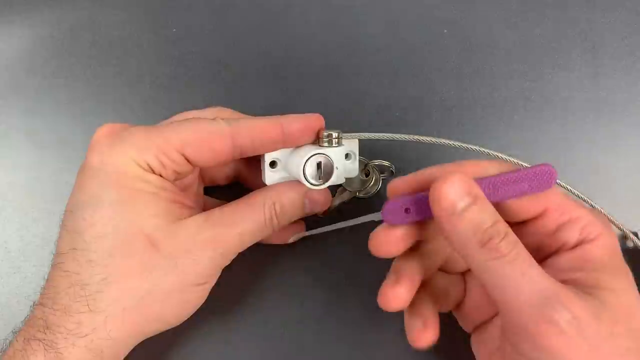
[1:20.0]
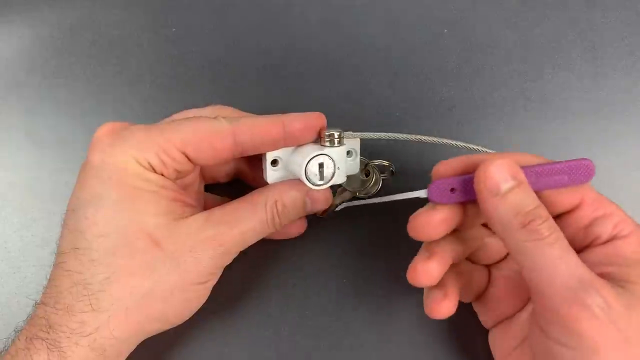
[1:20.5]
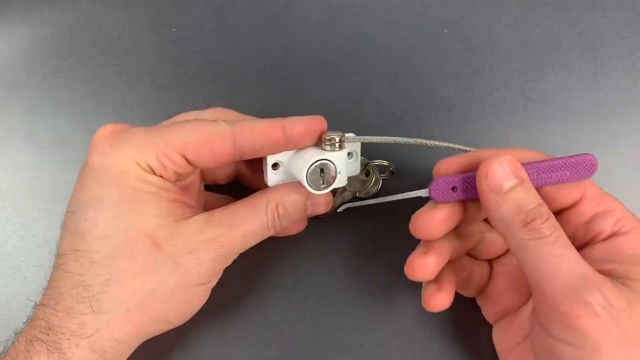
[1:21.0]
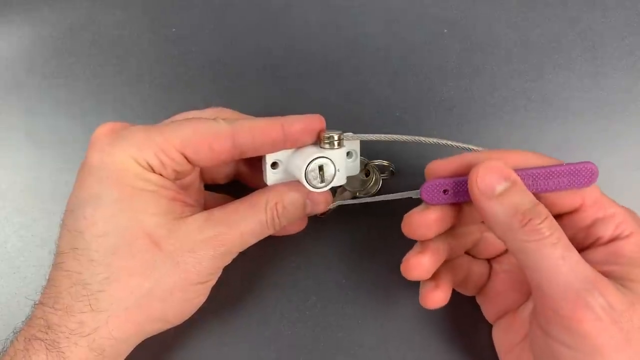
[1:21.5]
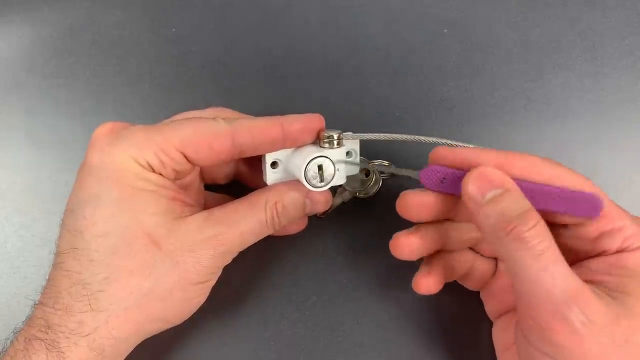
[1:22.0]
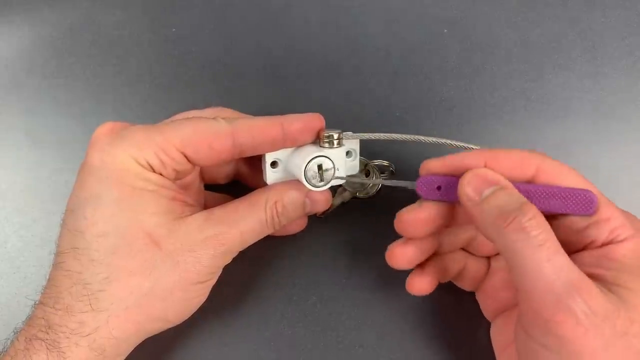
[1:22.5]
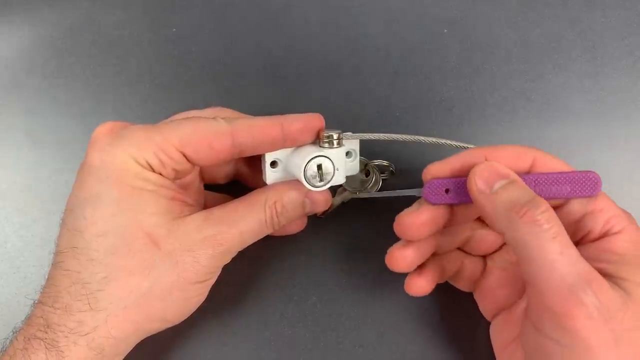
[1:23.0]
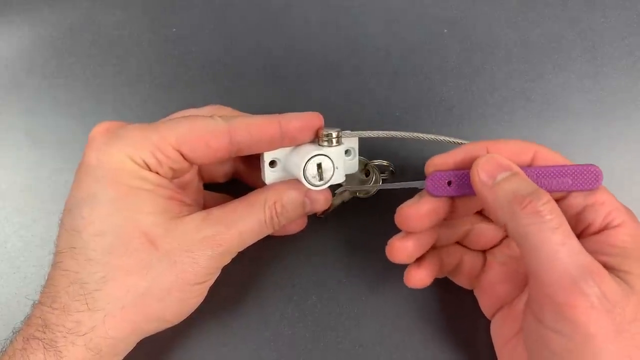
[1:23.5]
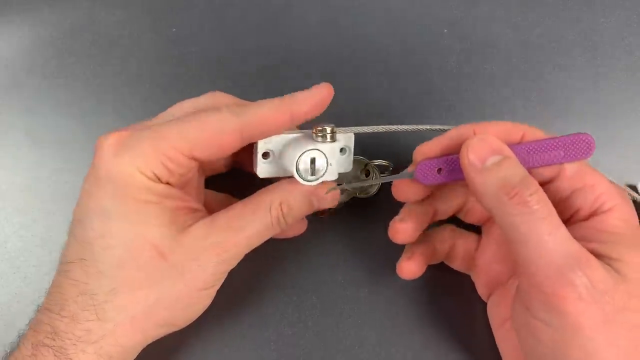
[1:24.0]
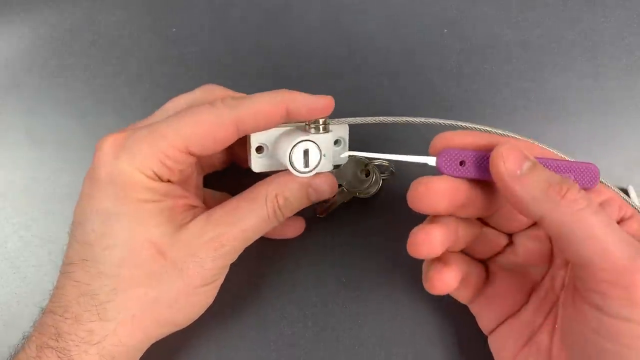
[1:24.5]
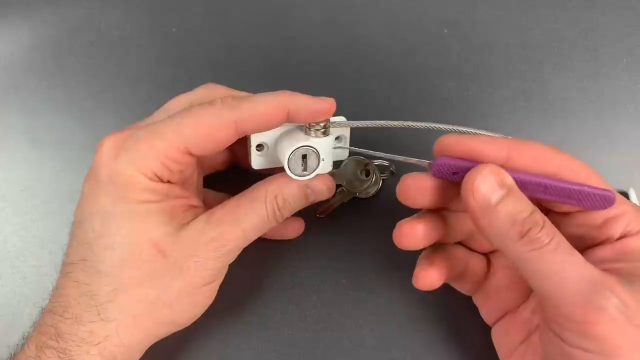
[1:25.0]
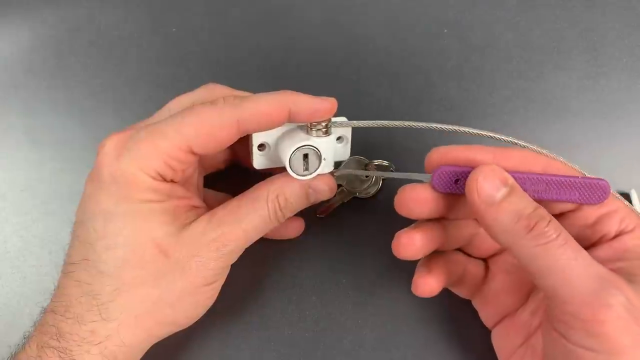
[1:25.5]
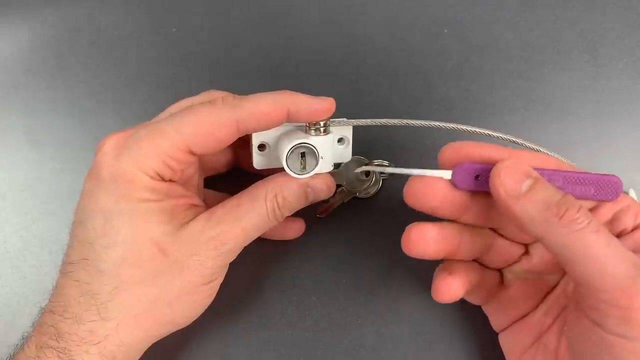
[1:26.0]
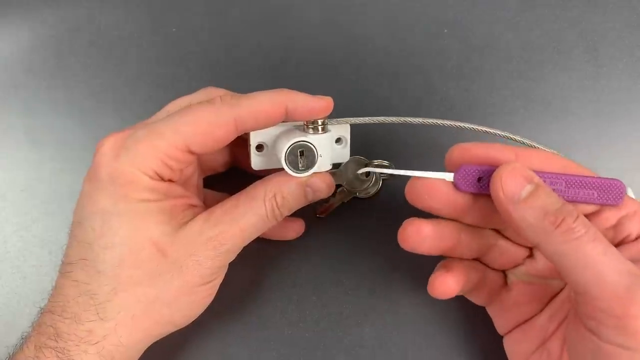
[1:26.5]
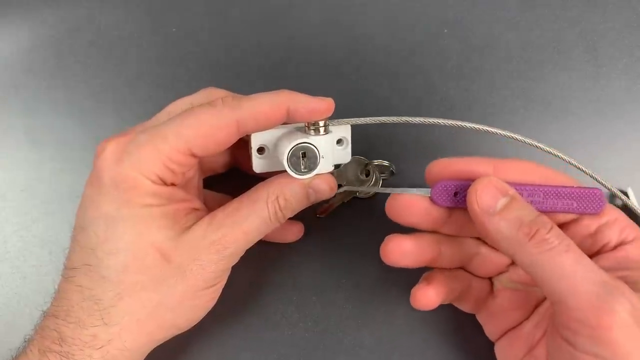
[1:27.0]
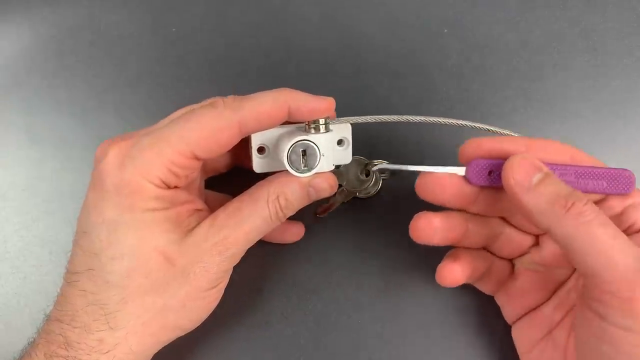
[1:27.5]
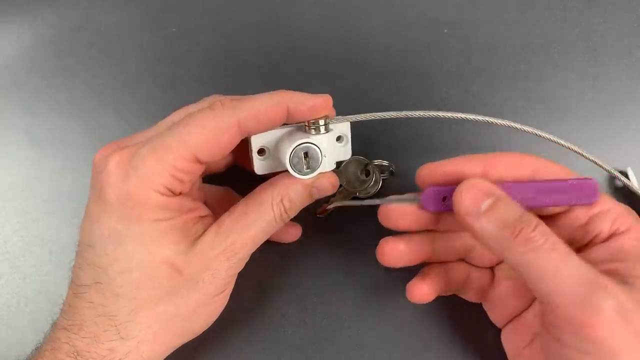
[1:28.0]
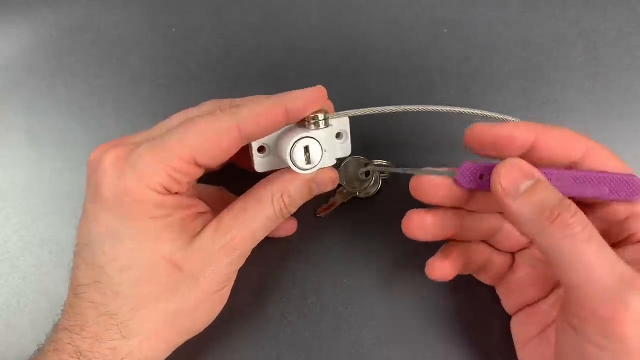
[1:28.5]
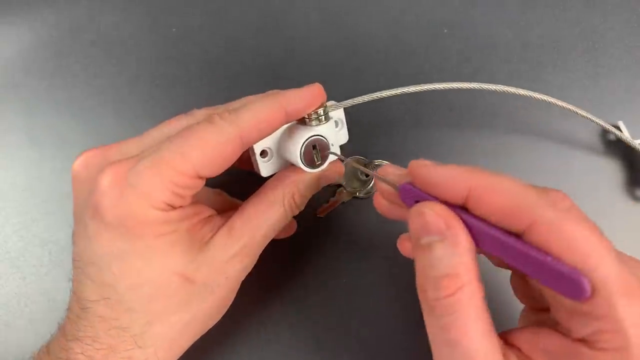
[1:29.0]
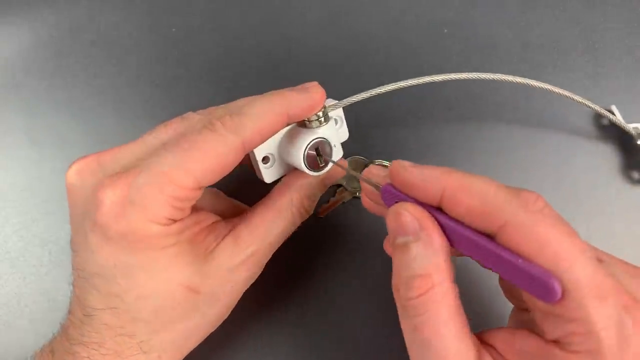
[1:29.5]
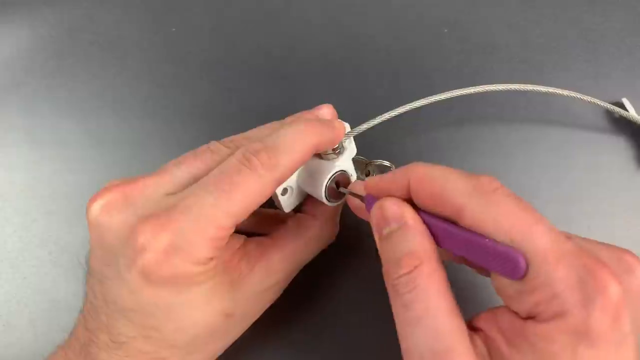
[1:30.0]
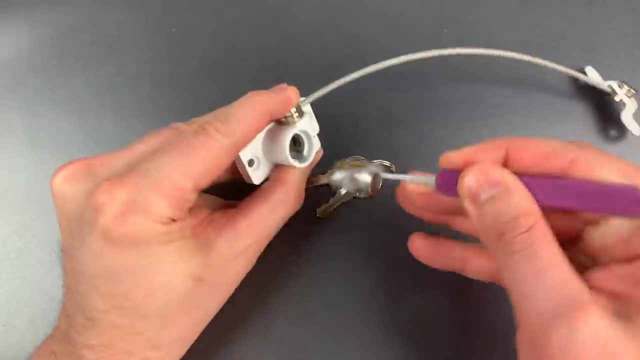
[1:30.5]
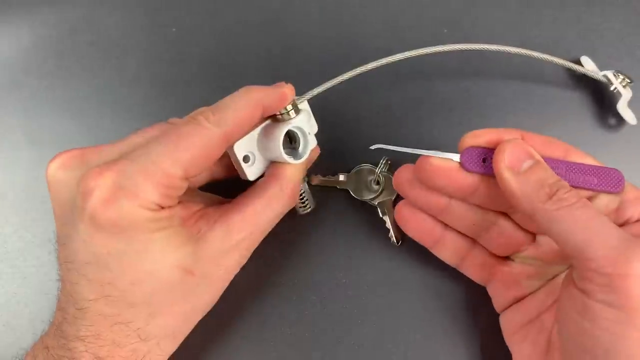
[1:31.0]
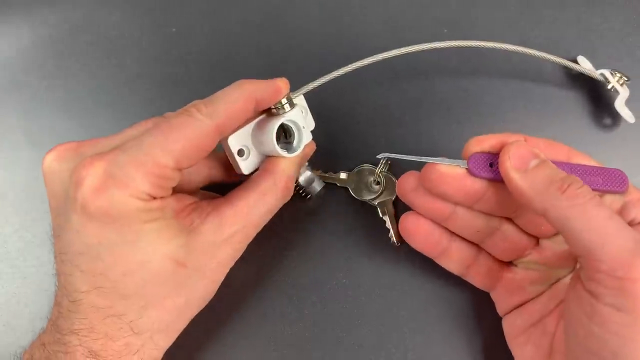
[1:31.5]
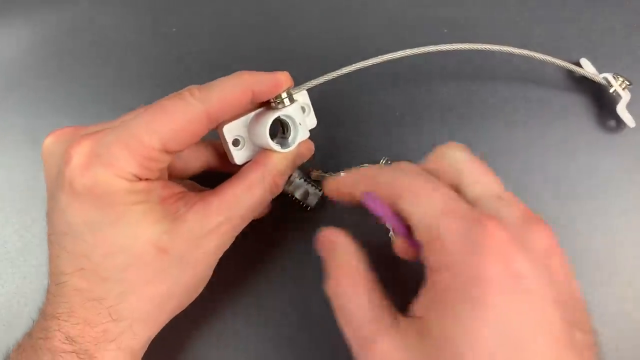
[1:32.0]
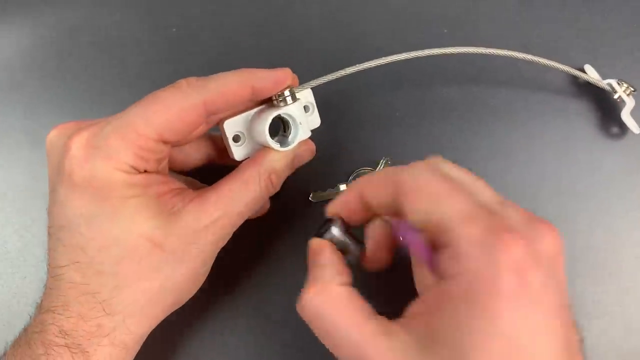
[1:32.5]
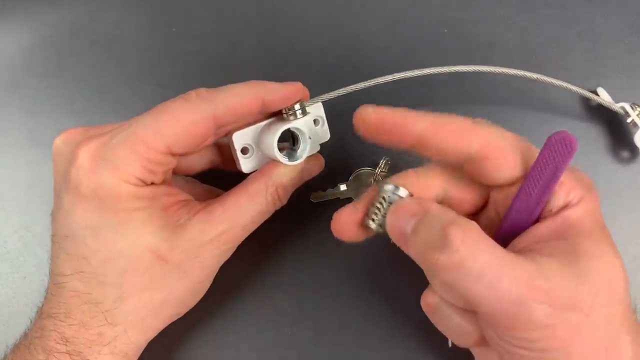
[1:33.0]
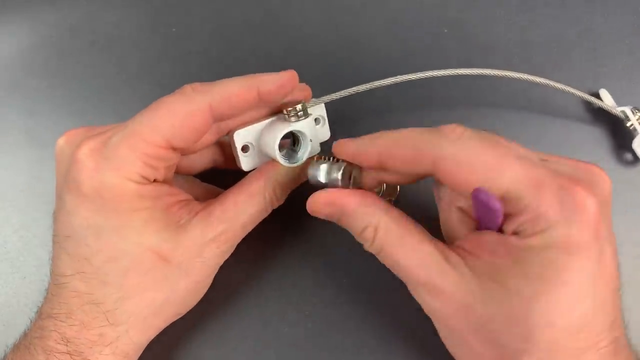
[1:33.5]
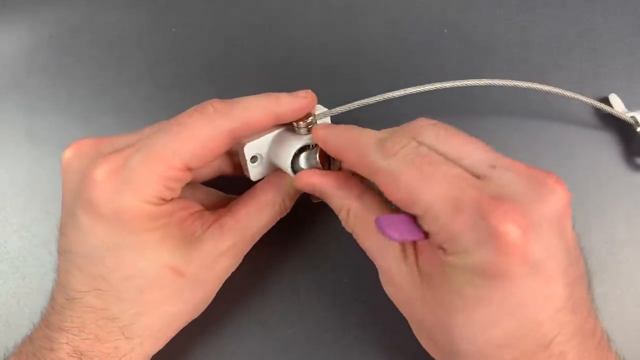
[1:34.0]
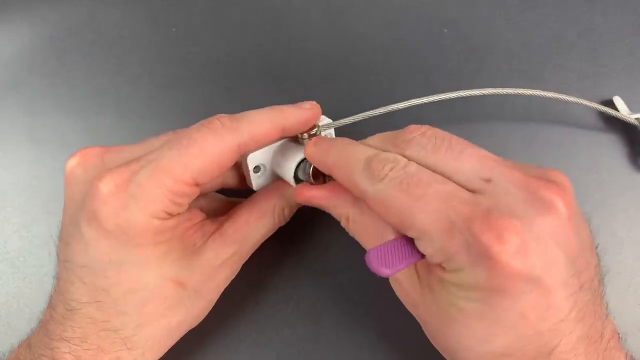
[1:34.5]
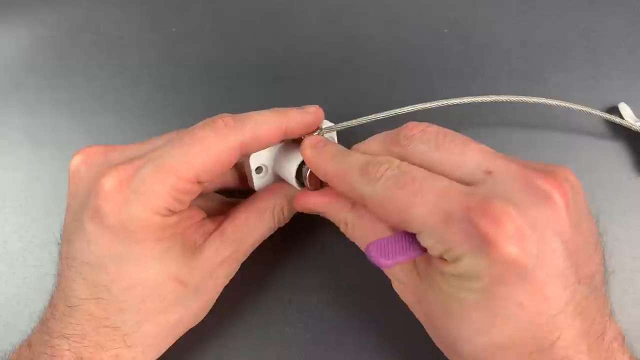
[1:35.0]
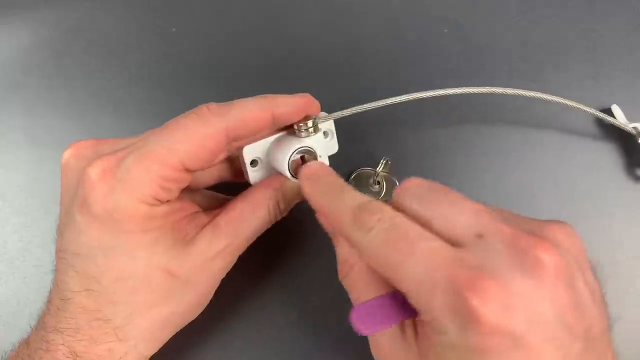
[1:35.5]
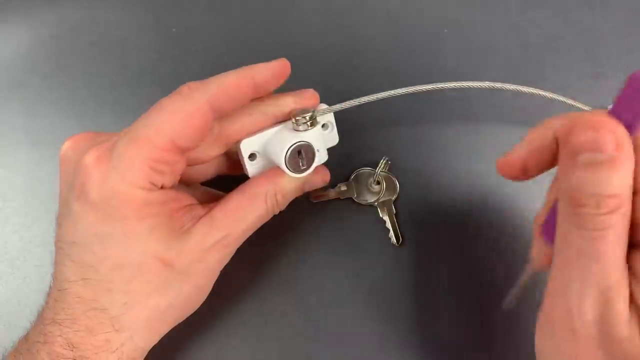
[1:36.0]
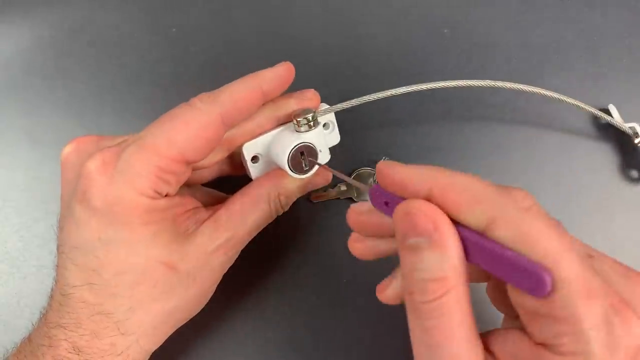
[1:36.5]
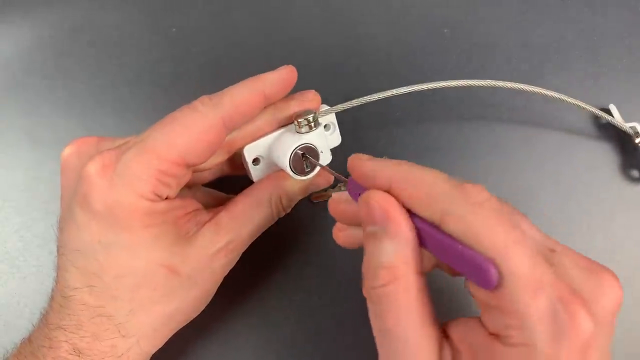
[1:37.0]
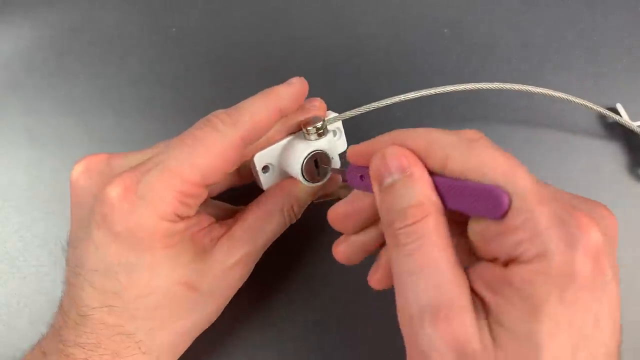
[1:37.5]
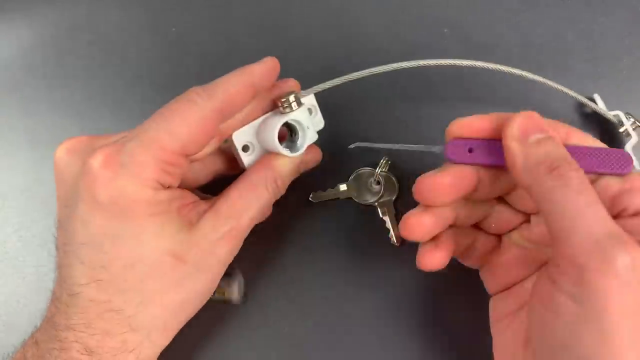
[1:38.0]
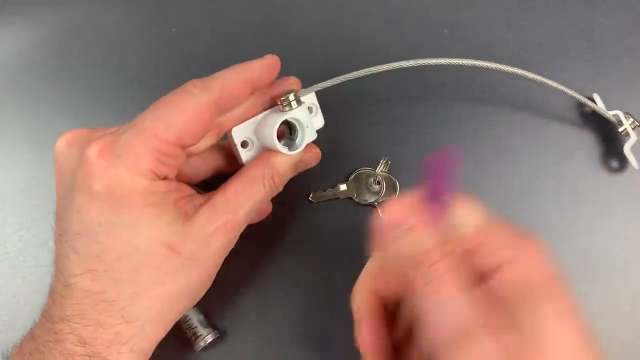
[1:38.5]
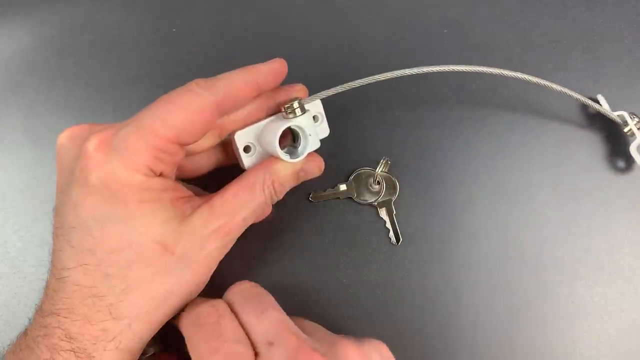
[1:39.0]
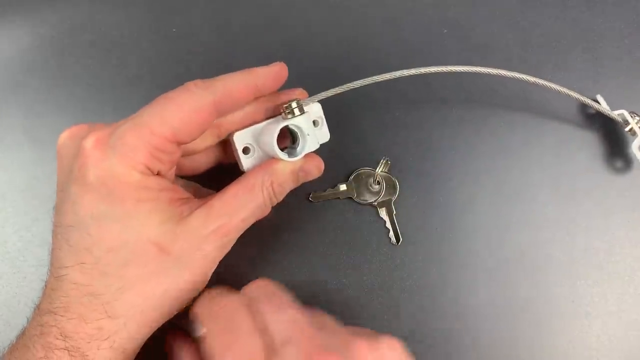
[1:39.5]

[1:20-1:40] A man holds a pick-type item in one hand and a door lock in the other. He uses the pick to take the door lock slit out of the lock mechanism and then puts it back in, evidently showing how the lock could be changed to use a different set of keys. The pick has a purple handle and a long silver metal shaft. The door lock is attached to a metal cord of some sort, possibly for stabilizing the lock.